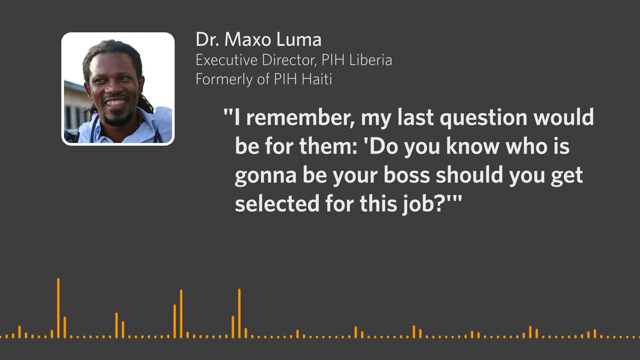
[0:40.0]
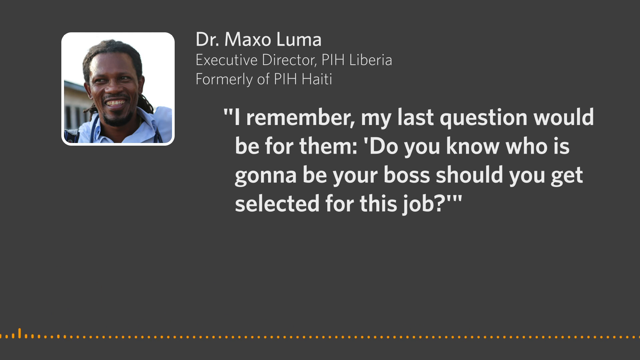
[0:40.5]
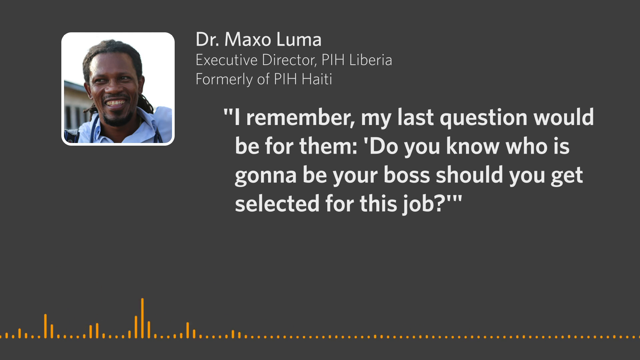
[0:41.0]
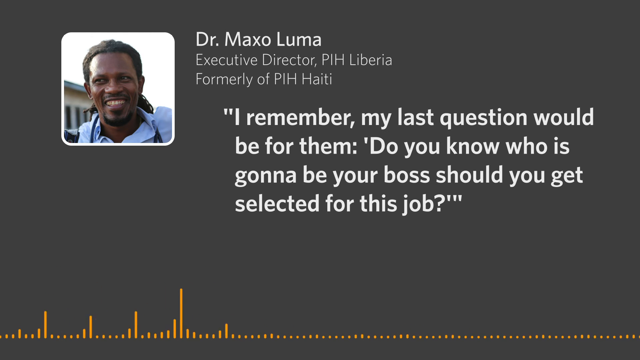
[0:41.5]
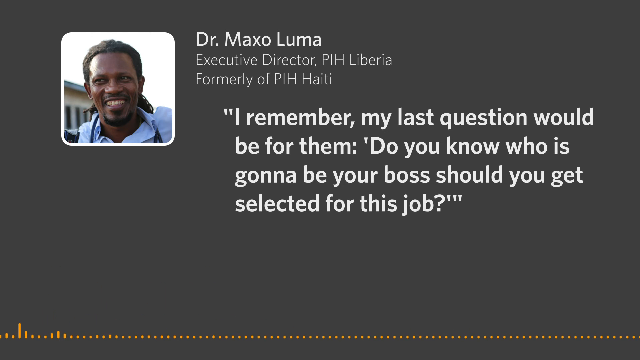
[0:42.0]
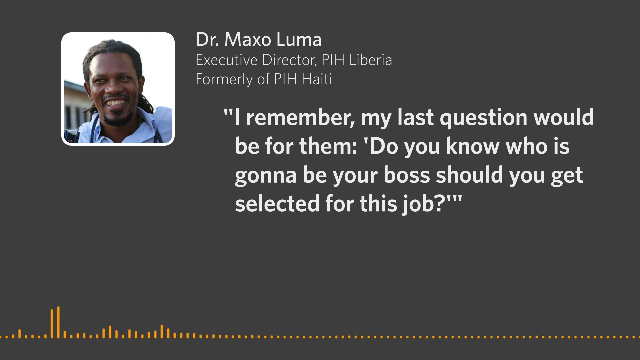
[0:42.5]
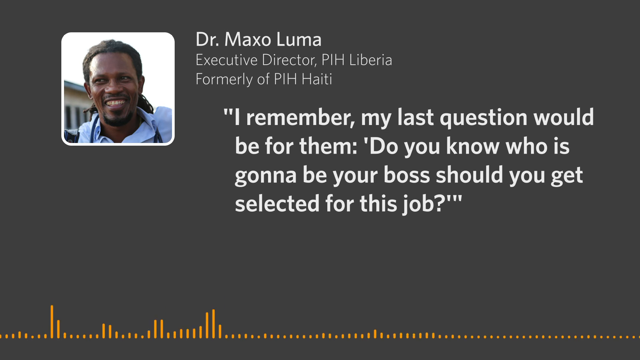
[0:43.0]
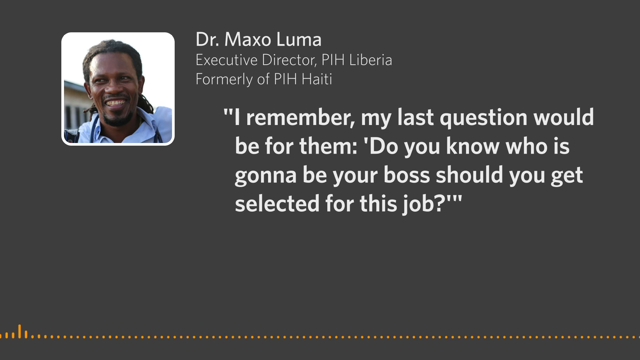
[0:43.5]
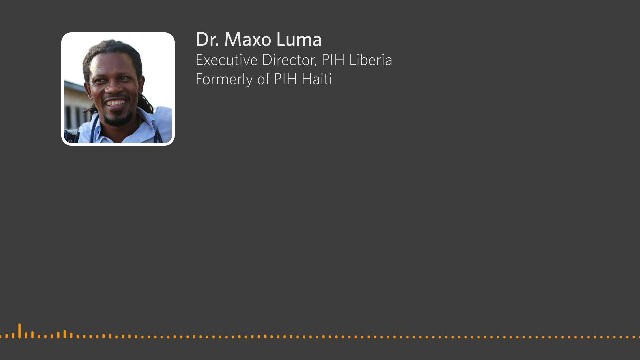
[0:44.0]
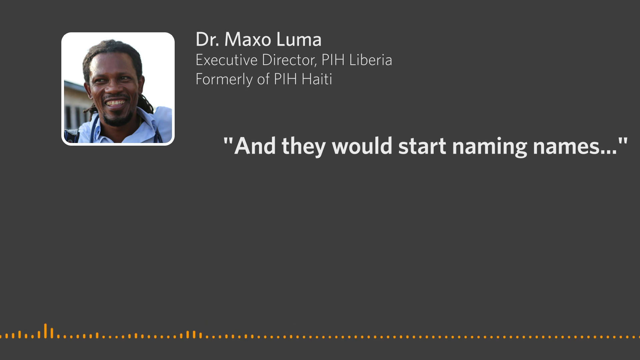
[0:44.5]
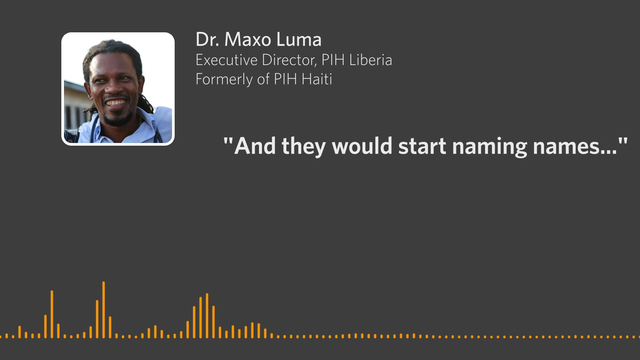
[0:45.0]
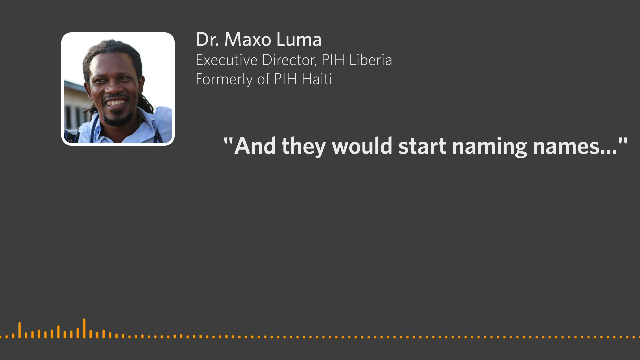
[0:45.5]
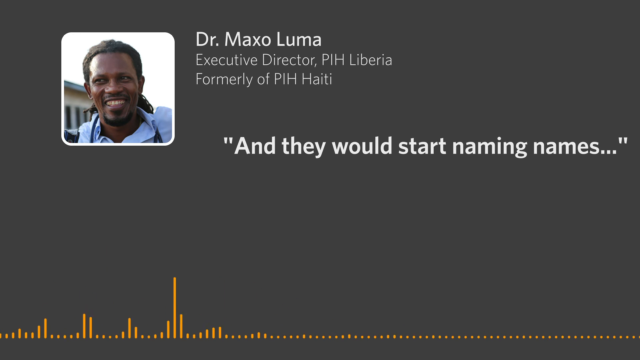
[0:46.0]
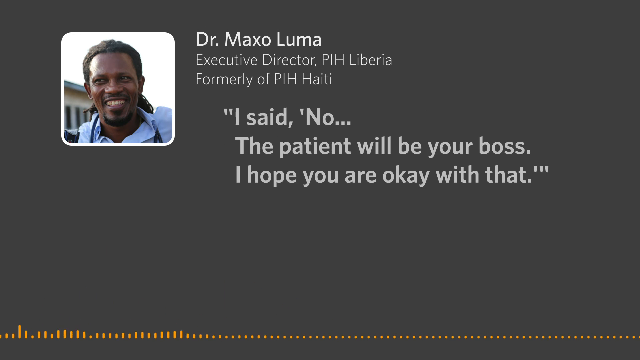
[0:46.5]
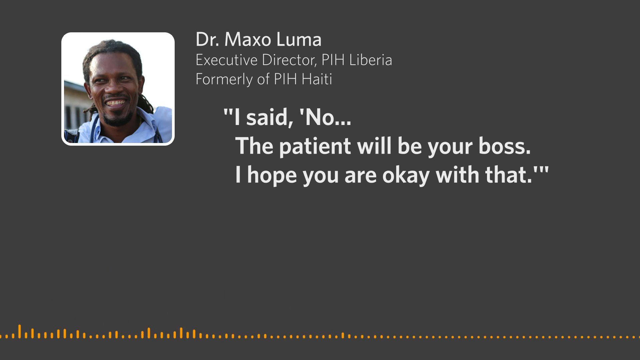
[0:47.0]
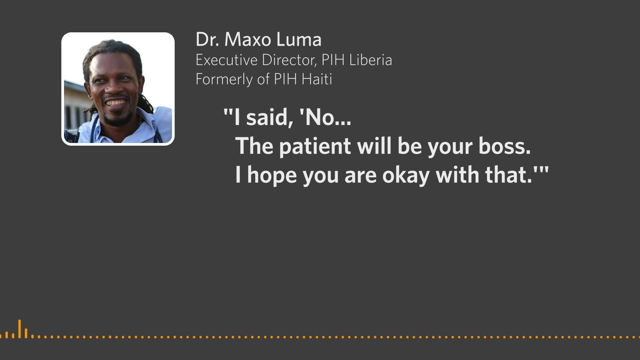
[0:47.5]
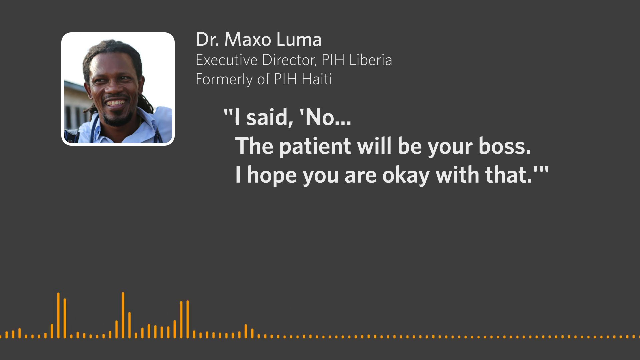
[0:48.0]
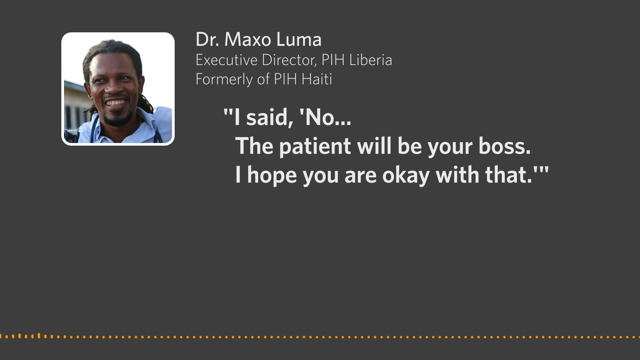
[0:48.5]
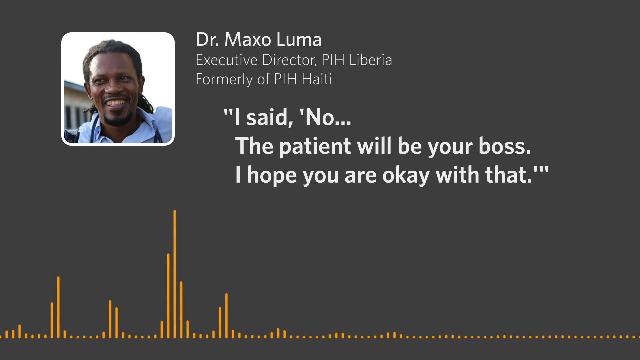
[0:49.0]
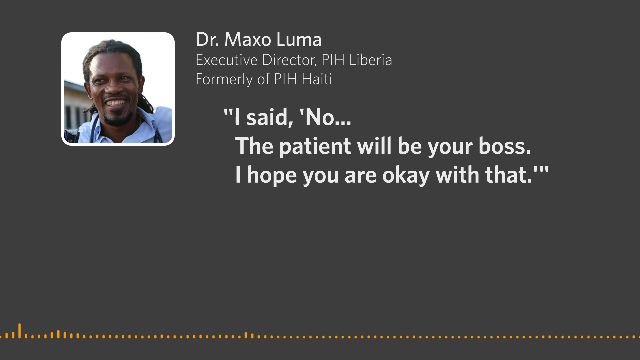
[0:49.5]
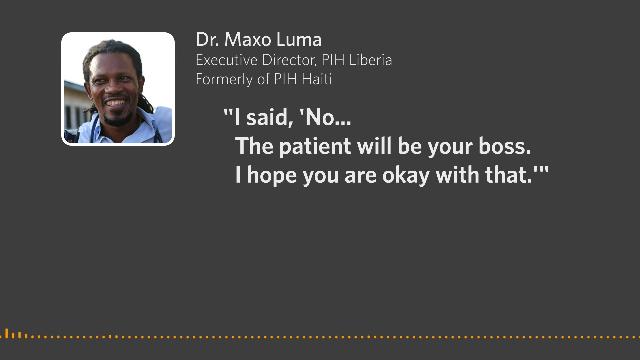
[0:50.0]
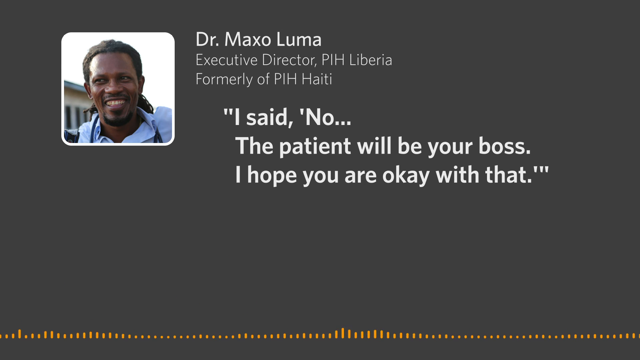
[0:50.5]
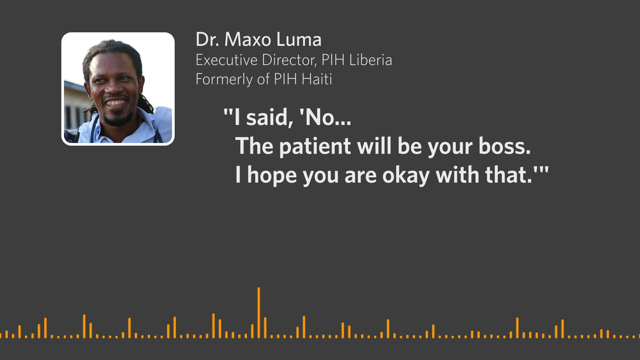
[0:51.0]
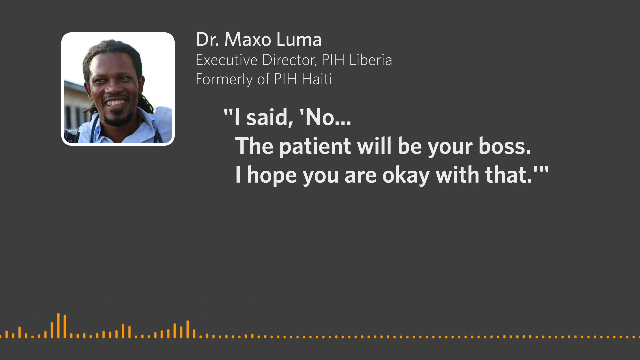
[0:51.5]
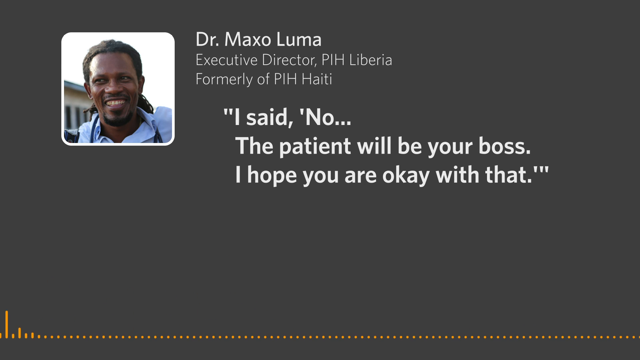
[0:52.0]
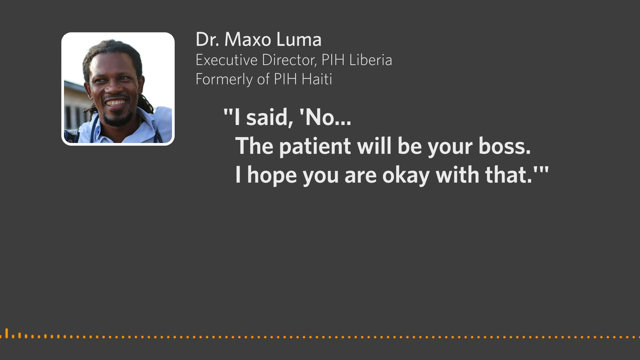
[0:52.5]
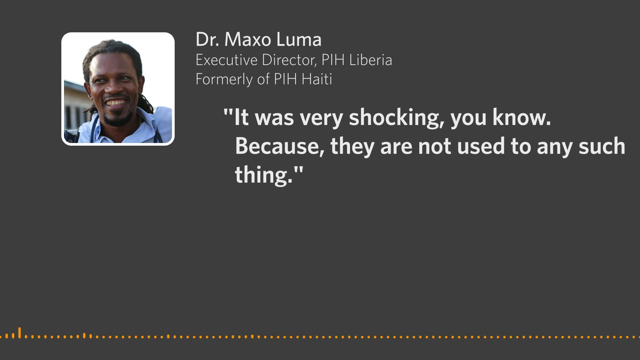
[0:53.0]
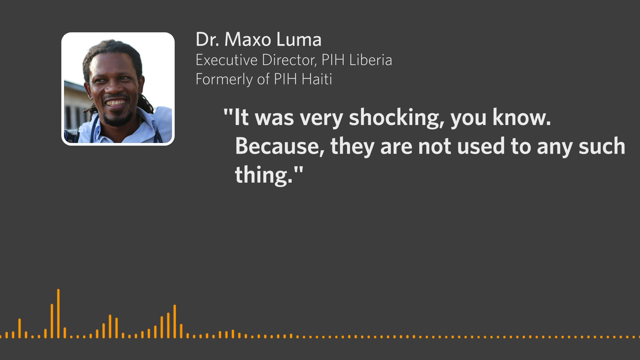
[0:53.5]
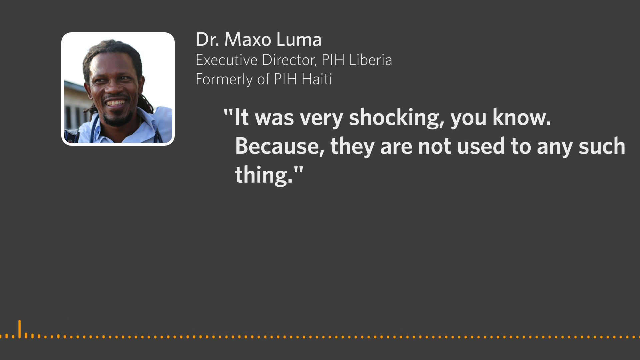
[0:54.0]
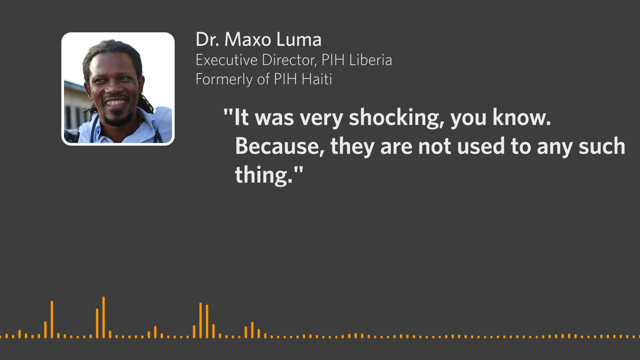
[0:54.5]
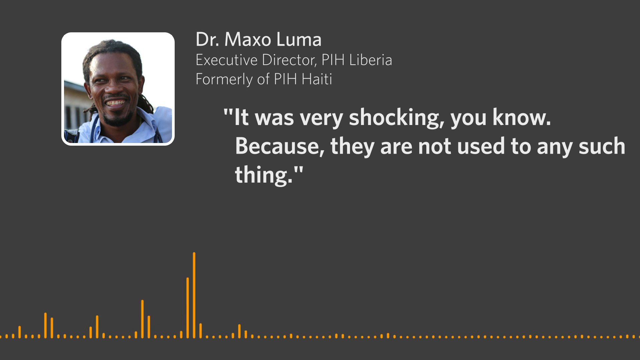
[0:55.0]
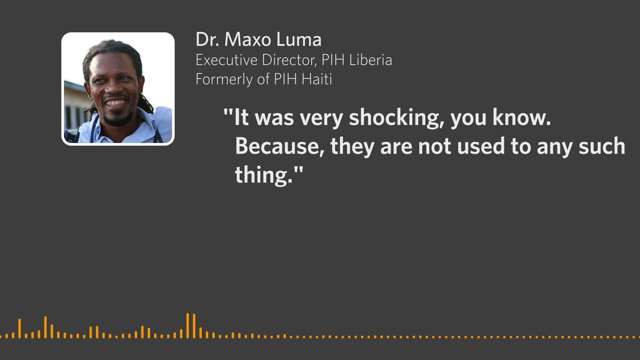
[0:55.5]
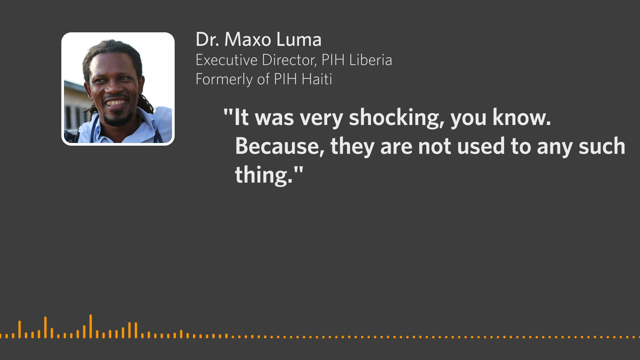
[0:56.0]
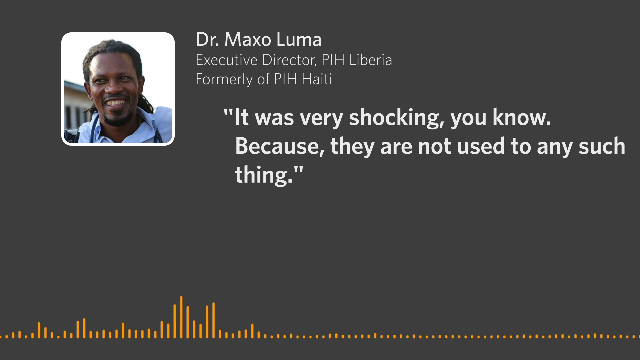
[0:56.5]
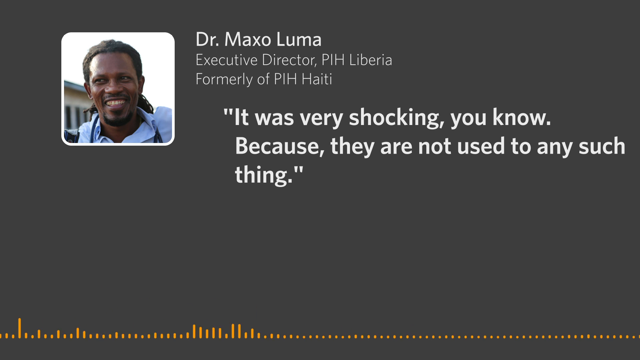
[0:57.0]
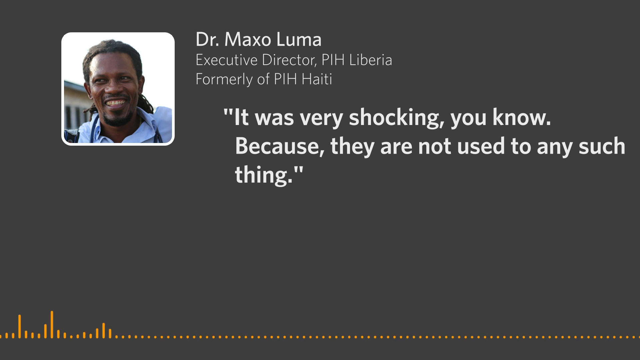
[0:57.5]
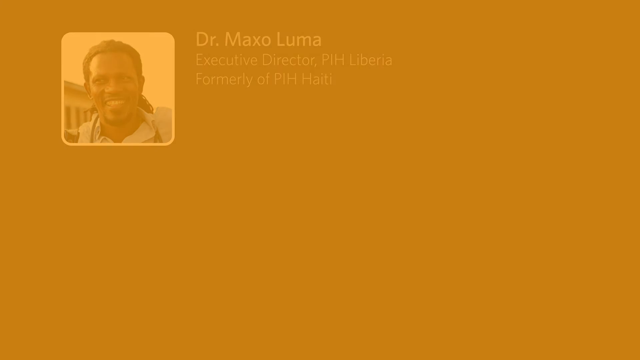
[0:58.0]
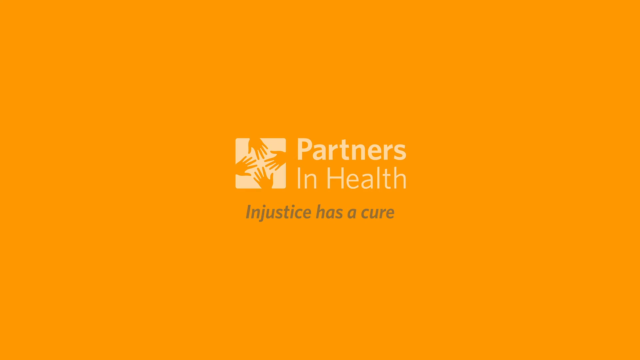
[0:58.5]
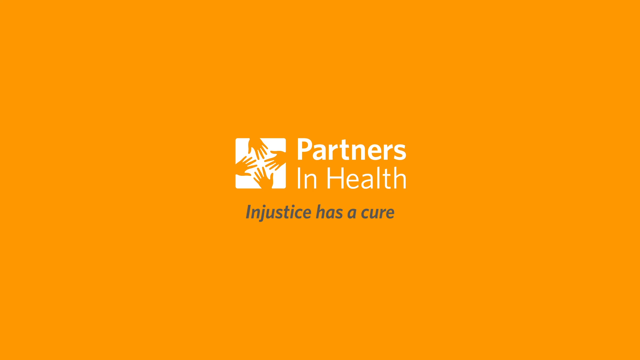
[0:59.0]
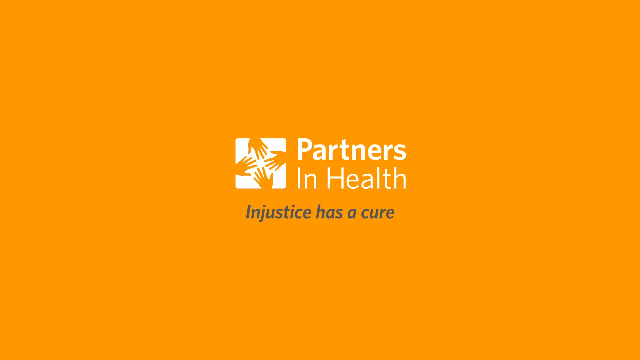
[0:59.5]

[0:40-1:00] The layout is unchanged, with white text in the centre. The text reads "and they would start naming names", then changes to "I said no, the patient will be your boss, I hope you are okay with that." and then to "It was very shocking, you know, any such thing." The screen then becomes completely orange, with the image, the bar and the text removed; this happens in a swiping motion, a fade-in transition that begins at the bottom and ends at the top. In the centre of the orange screen is a logo for Partners in Health in white text, and underneath, text reads "Injustice Has a Cure". To the left of this text is a logo: a white box with four hands, one from each side of the square, reaching out to touch each other, all in the same orange as the background.